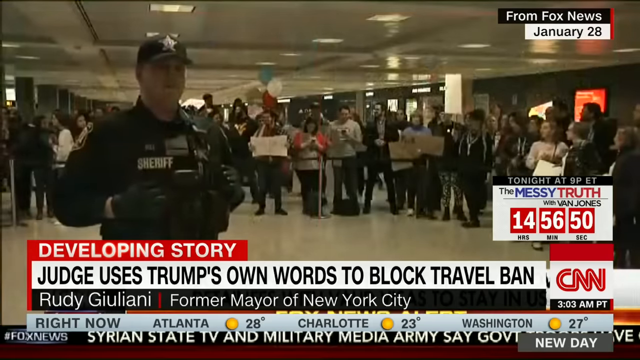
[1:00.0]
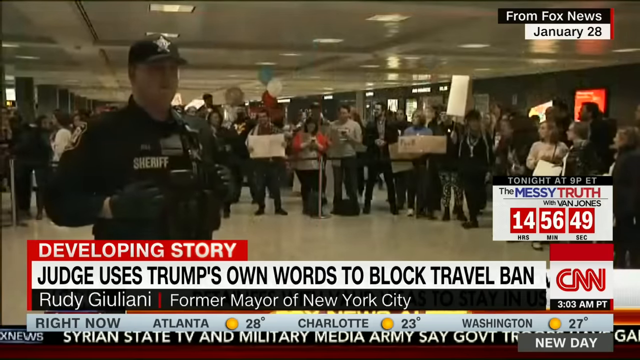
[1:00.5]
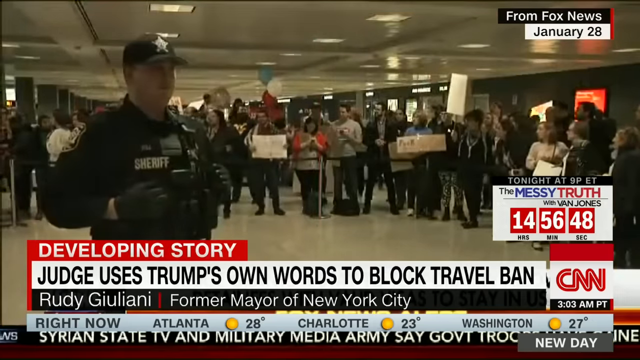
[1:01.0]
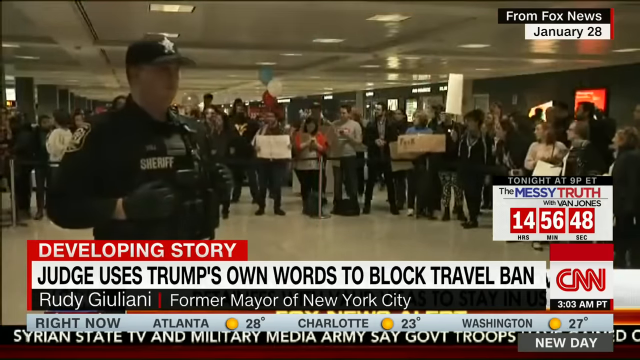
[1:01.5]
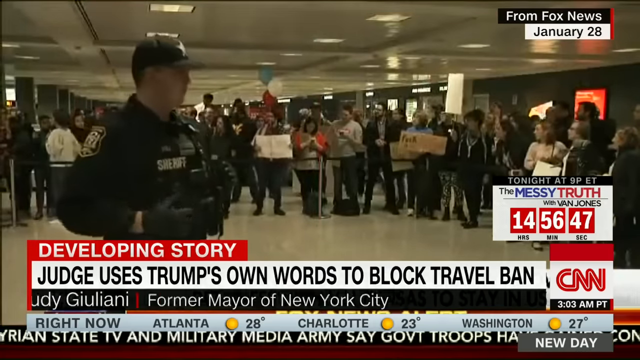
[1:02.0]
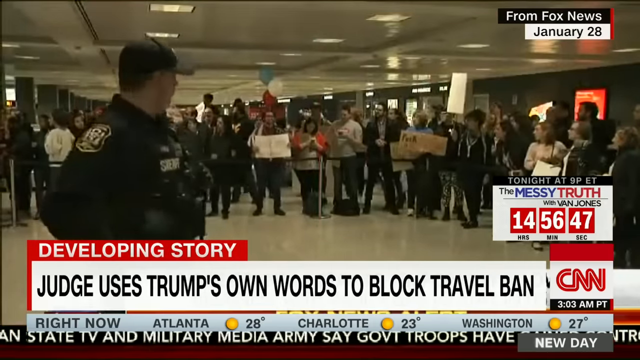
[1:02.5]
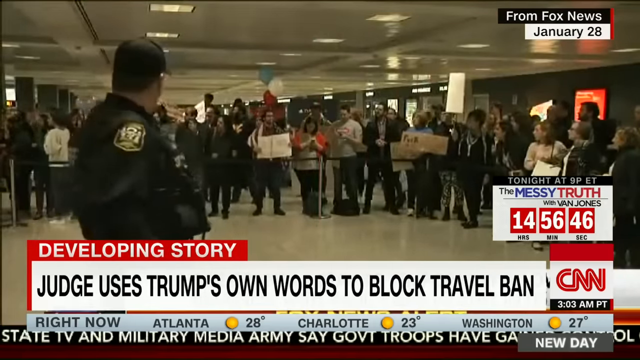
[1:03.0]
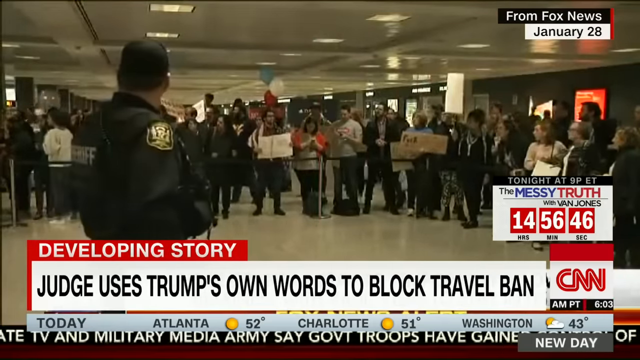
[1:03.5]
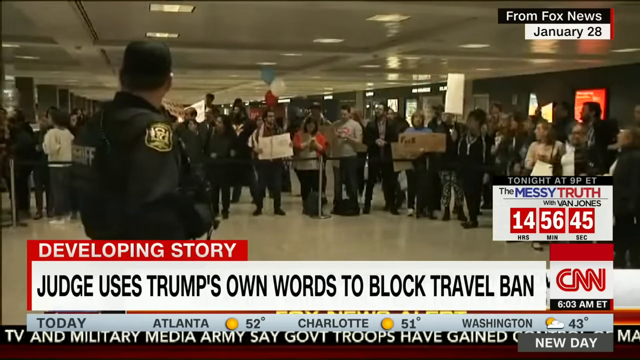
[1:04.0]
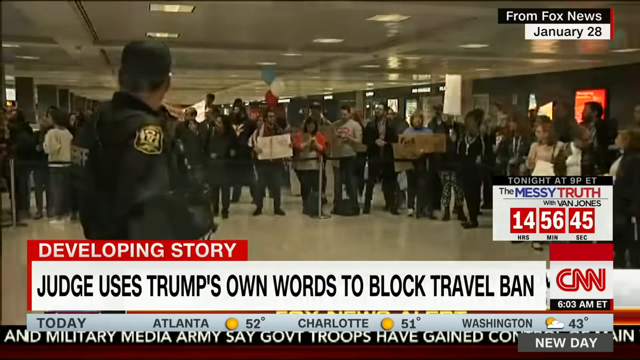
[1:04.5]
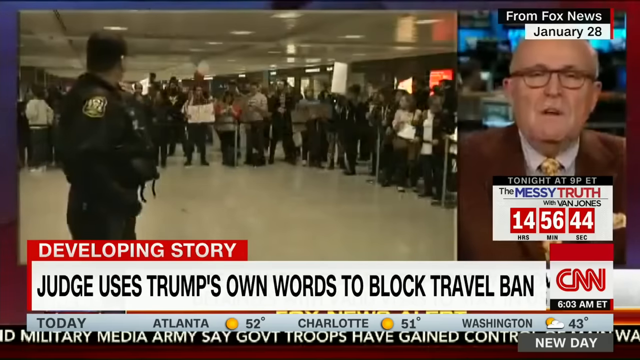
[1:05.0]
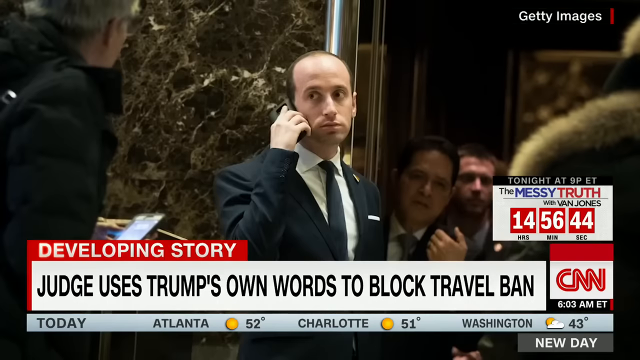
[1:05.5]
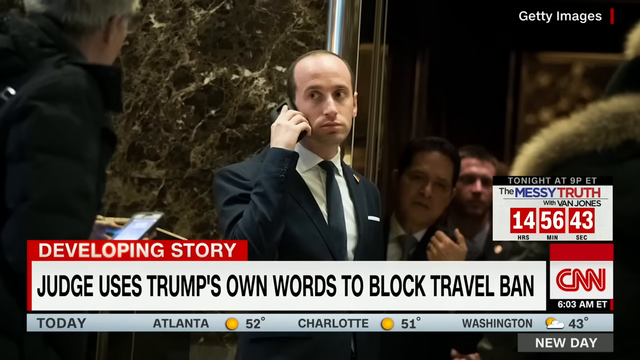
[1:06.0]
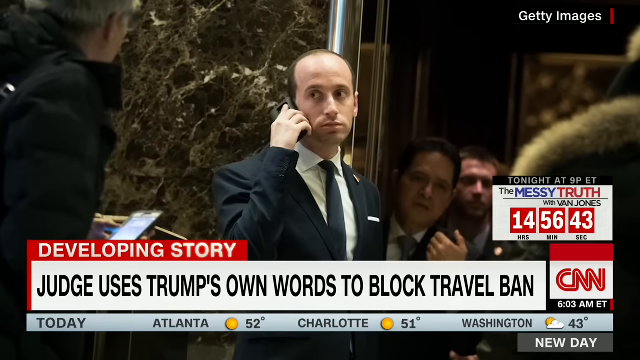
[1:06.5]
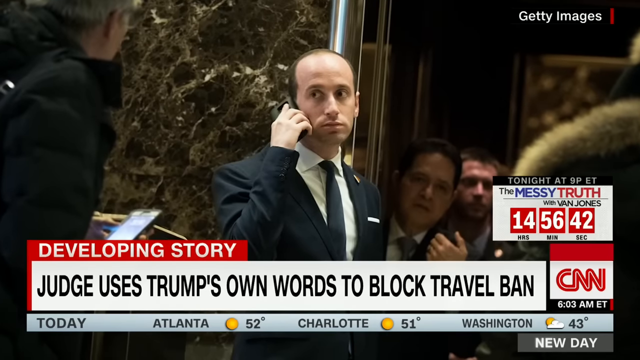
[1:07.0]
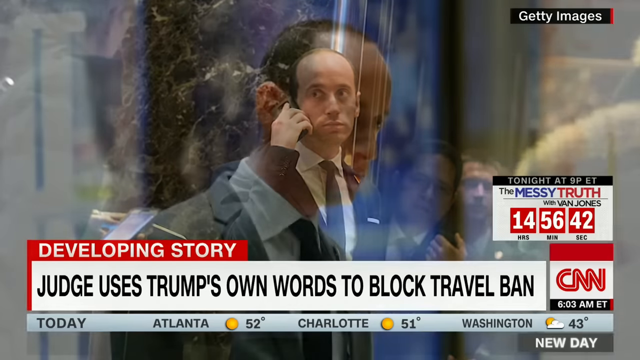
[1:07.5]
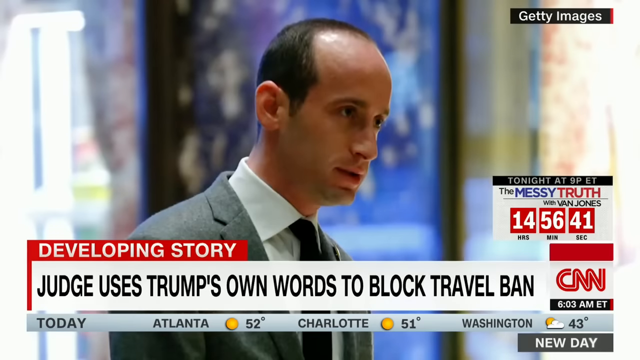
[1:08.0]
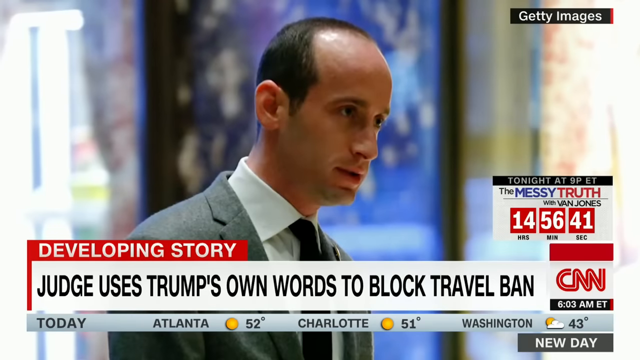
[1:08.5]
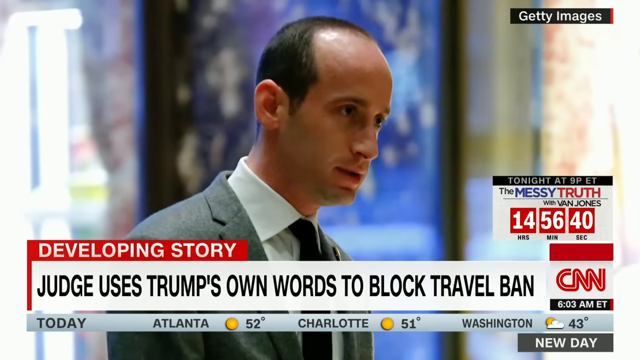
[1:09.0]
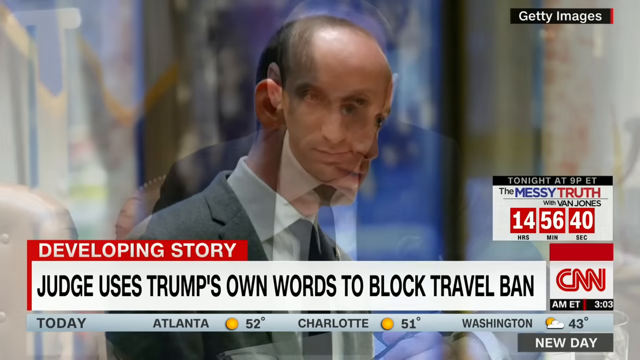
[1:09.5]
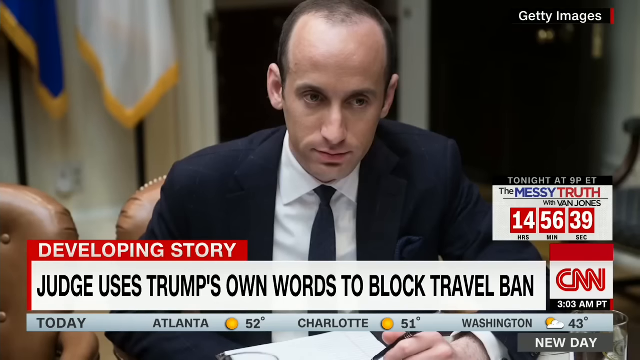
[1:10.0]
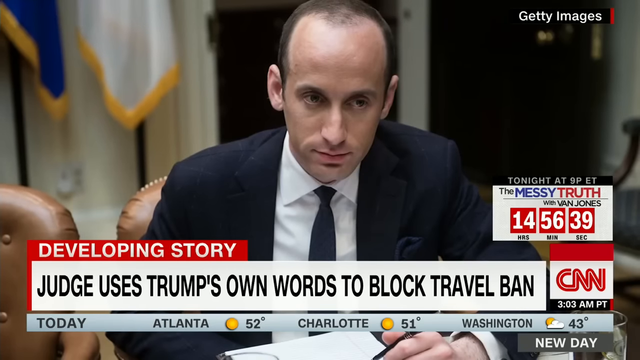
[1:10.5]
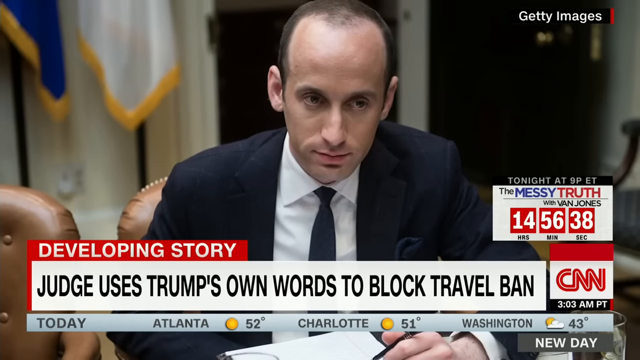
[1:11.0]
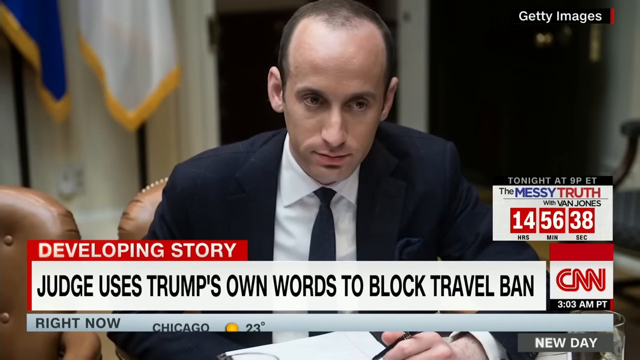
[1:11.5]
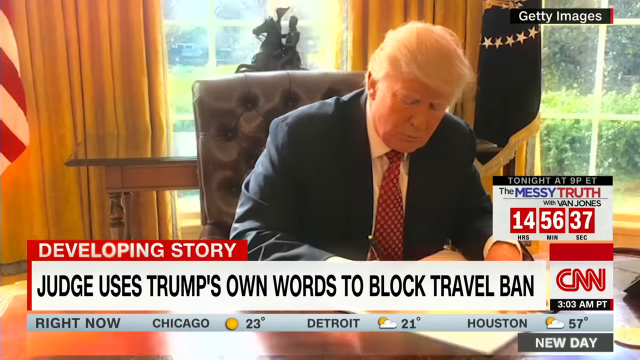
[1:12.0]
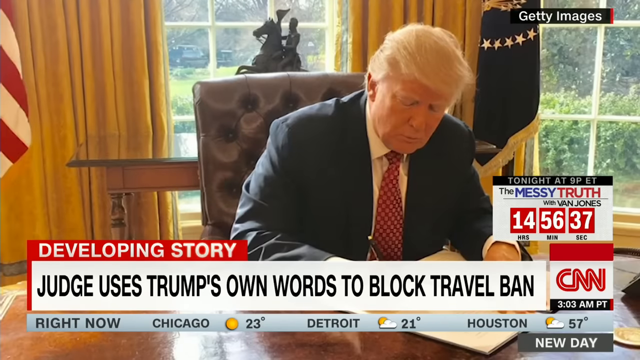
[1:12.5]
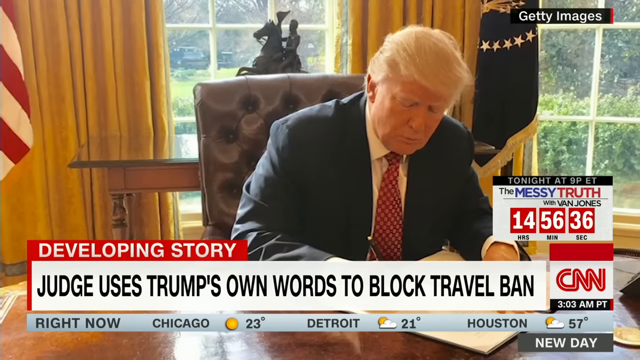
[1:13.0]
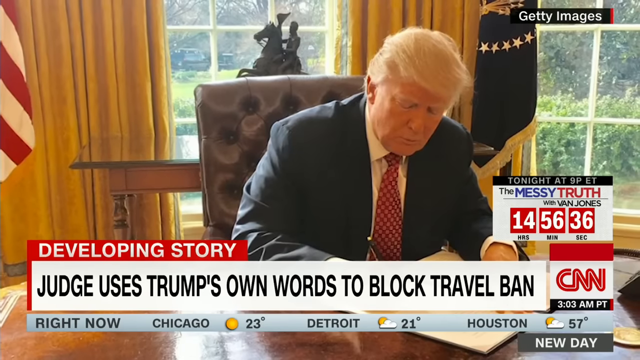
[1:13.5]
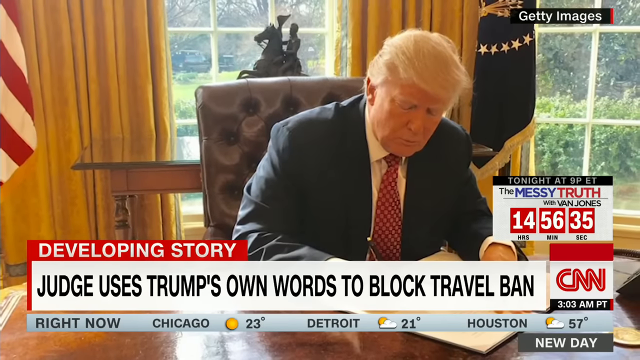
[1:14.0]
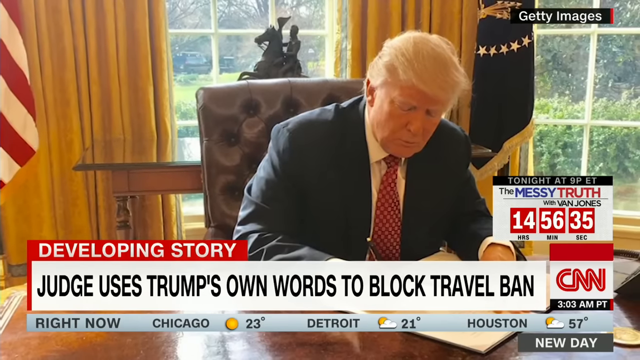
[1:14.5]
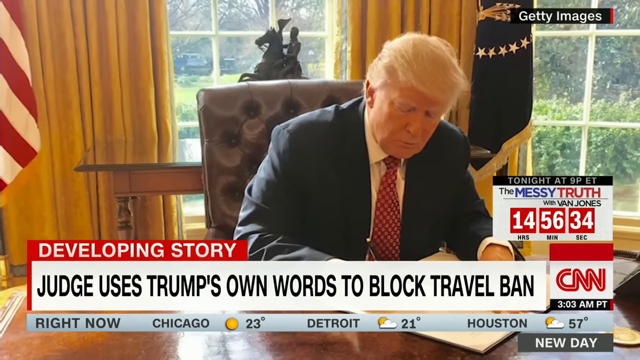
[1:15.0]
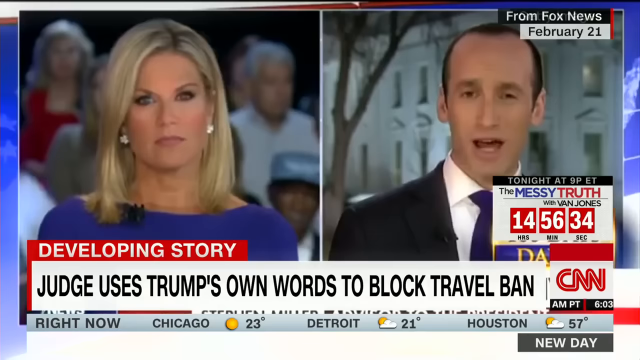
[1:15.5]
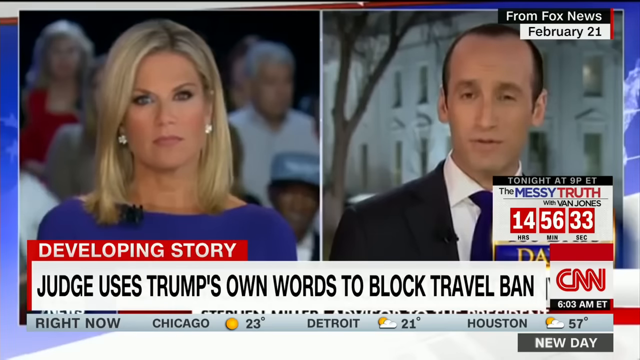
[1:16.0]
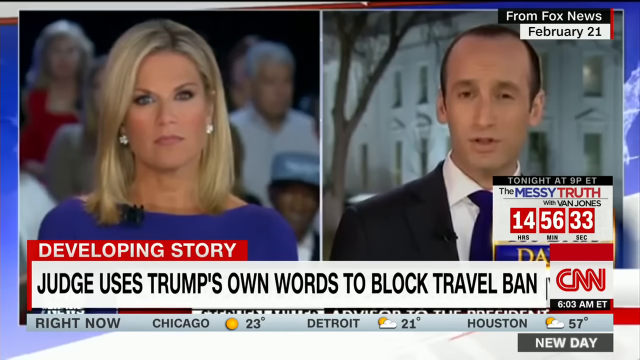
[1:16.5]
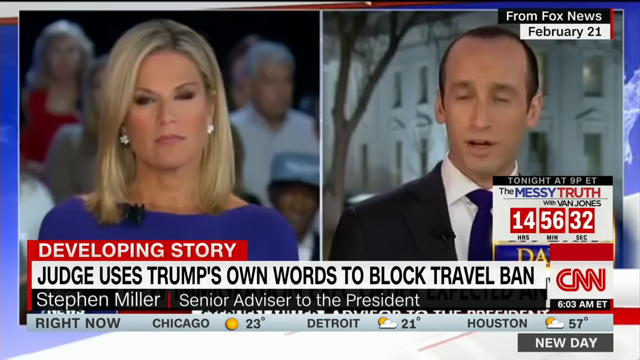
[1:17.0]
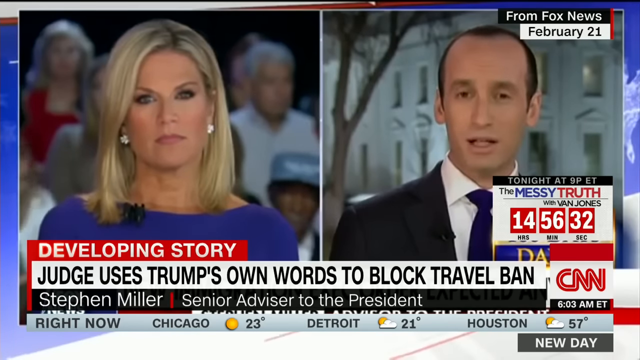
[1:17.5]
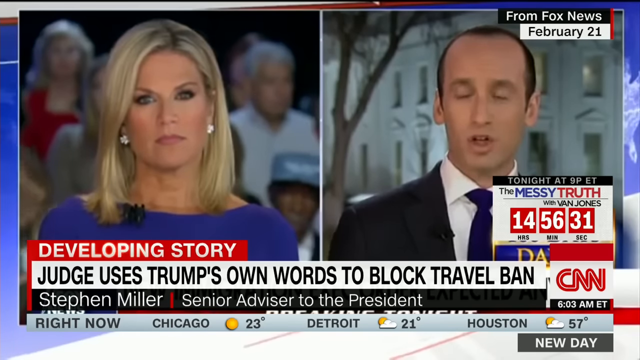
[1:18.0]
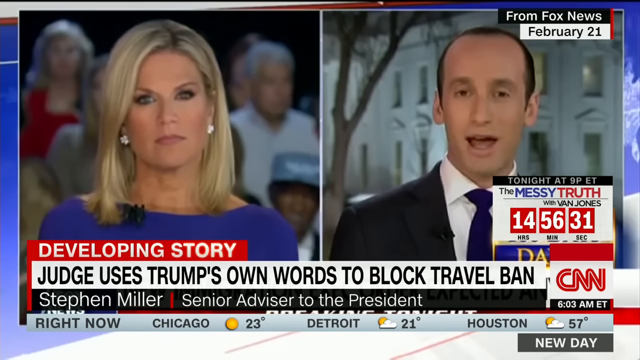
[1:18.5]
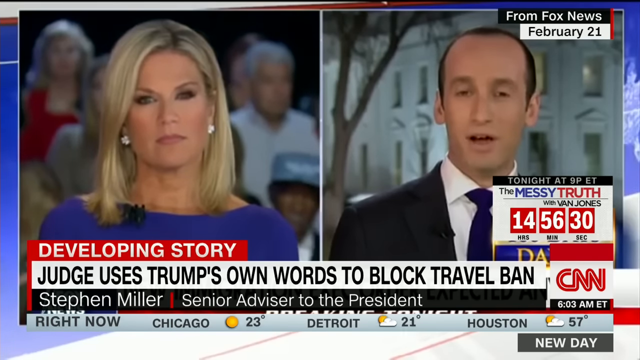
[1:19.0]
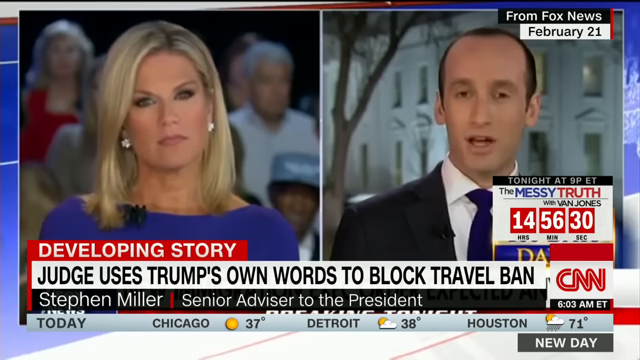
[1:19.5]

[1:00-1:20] The CNN news story about Trump's travel ban shows a sheriff's deputy decked out in paramilitary gear standing in front of a group of protesters, who appear to be in the lobby of Trump Tower protesting the travel ban. Rudy Giuliani appears briefly, and then the video swipes over to a still photo of Stephen Miller. An excerpt of a Fox news story follows in which Stephen Miller is interviewed; he is credited as senior advisor to the president.